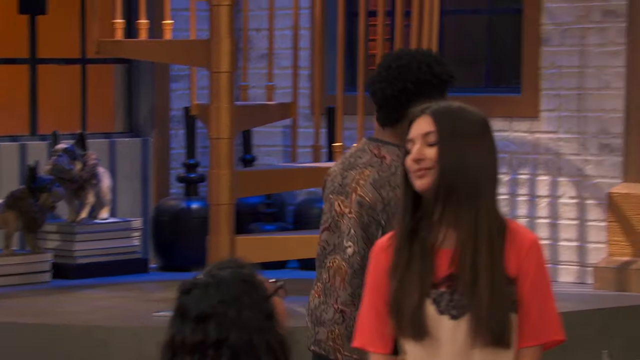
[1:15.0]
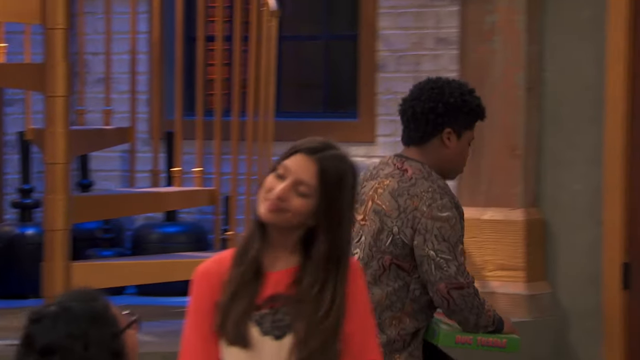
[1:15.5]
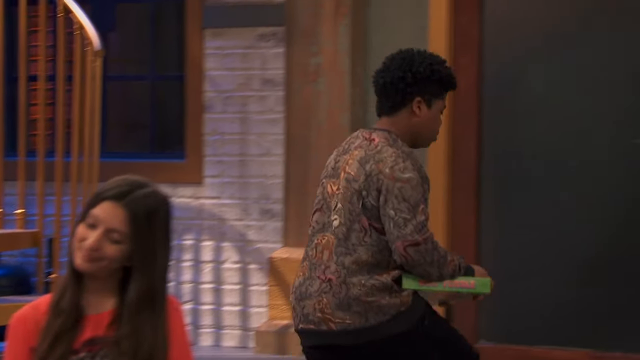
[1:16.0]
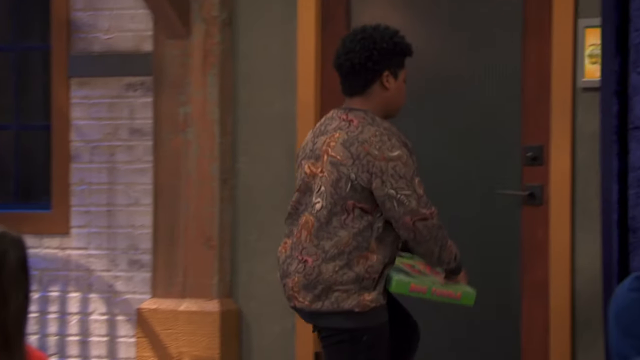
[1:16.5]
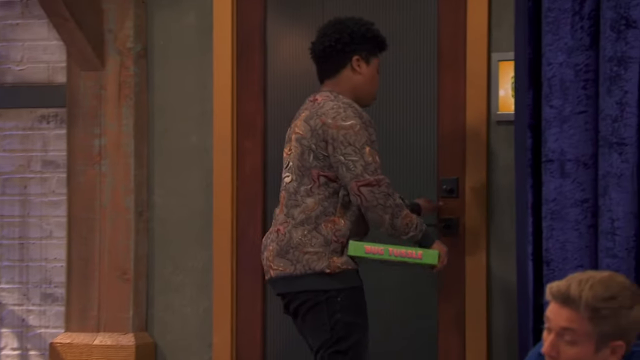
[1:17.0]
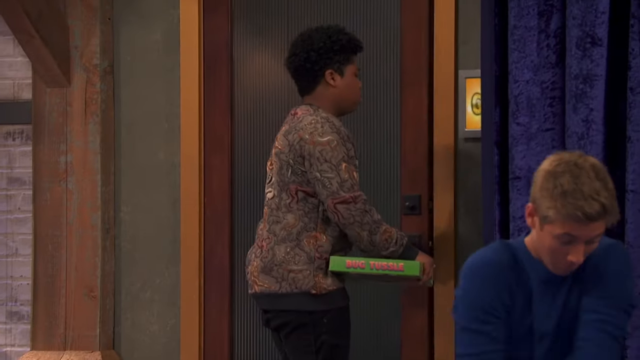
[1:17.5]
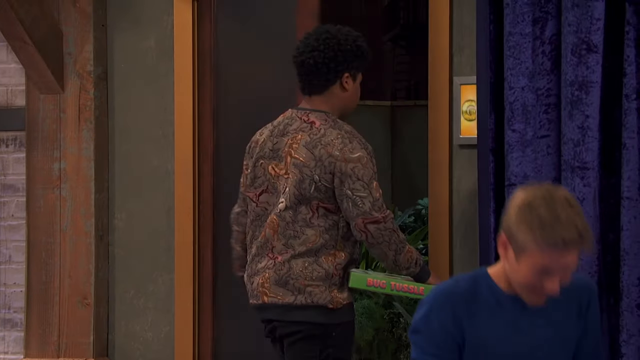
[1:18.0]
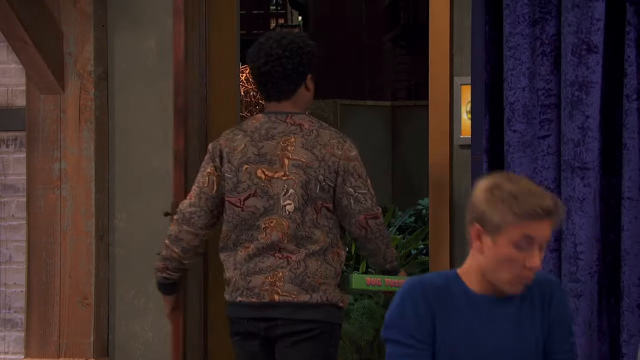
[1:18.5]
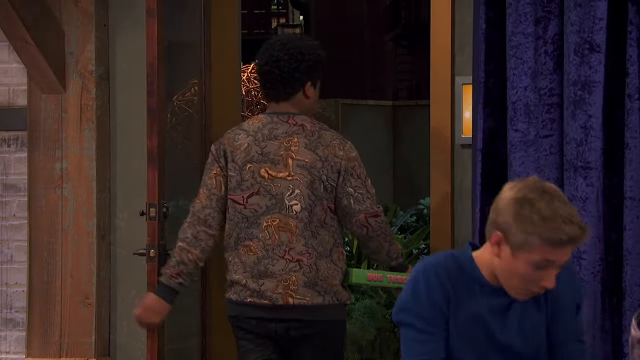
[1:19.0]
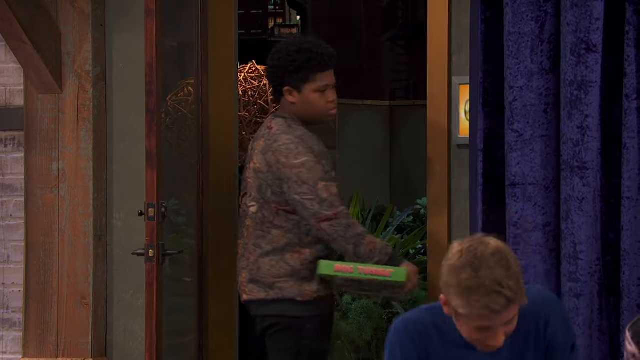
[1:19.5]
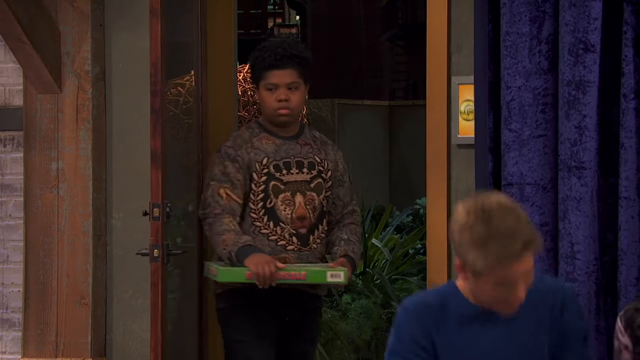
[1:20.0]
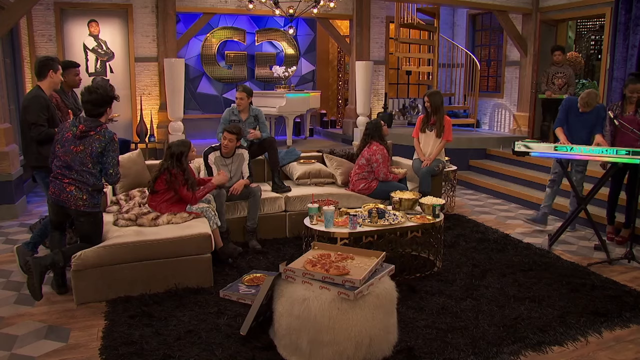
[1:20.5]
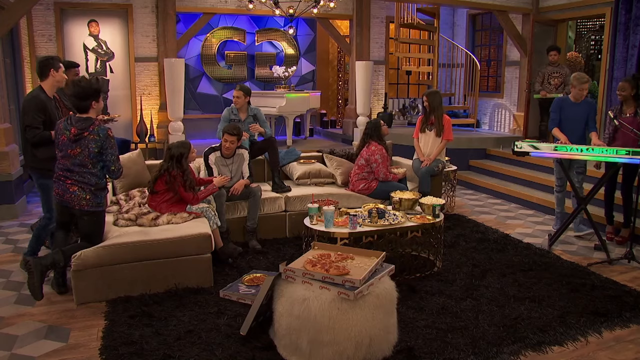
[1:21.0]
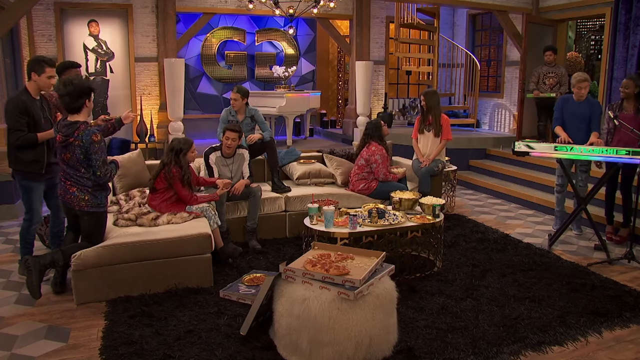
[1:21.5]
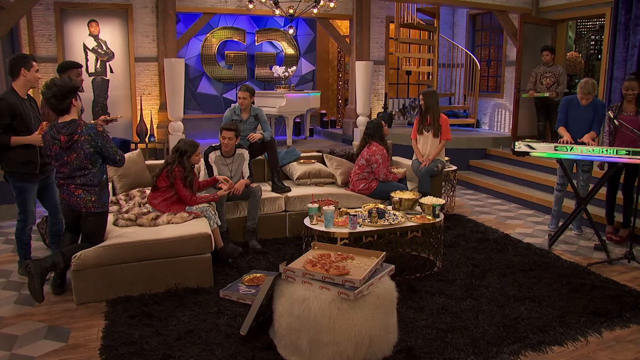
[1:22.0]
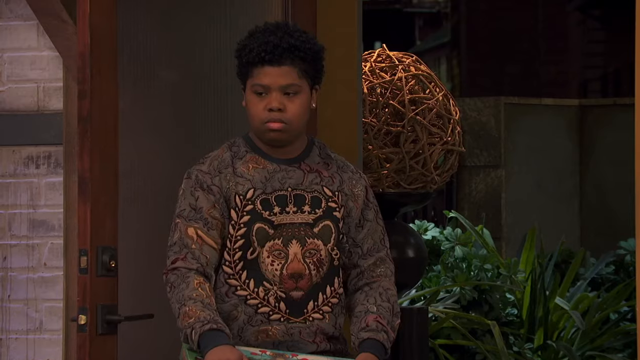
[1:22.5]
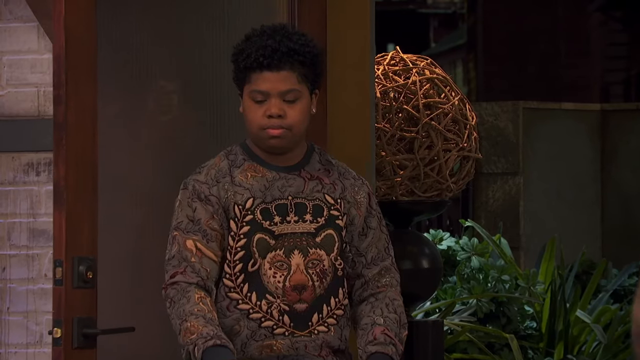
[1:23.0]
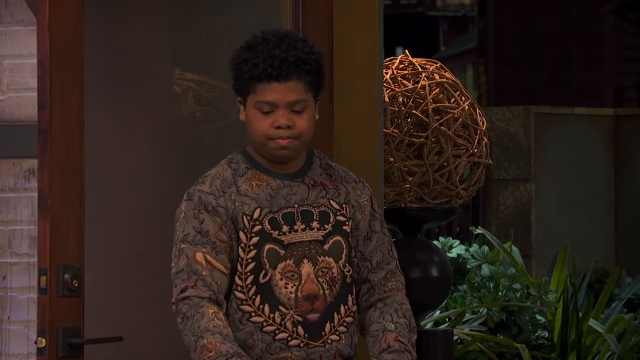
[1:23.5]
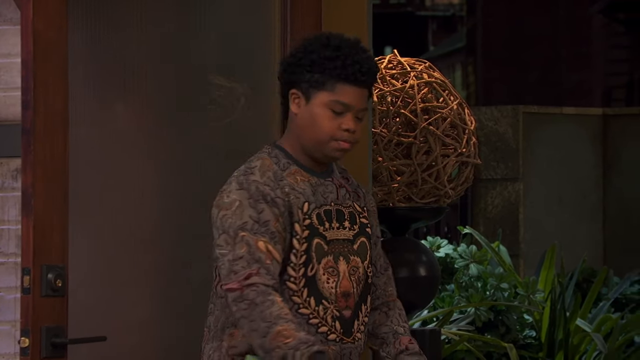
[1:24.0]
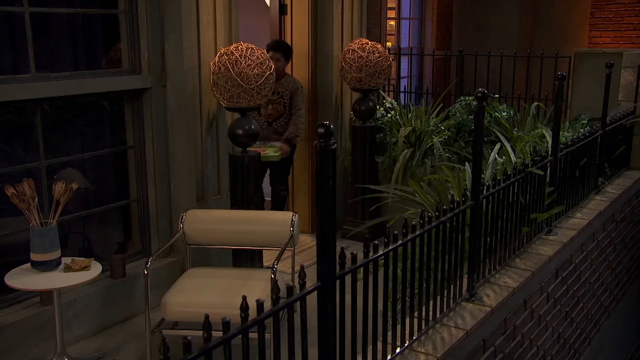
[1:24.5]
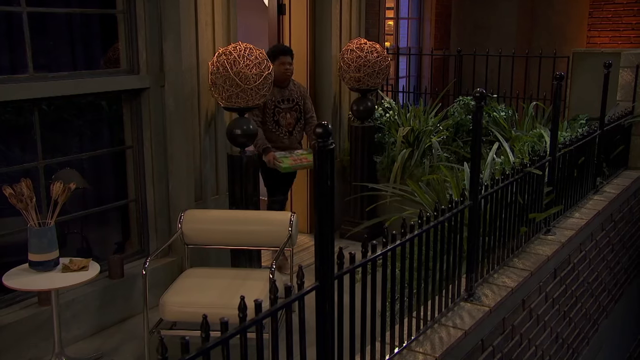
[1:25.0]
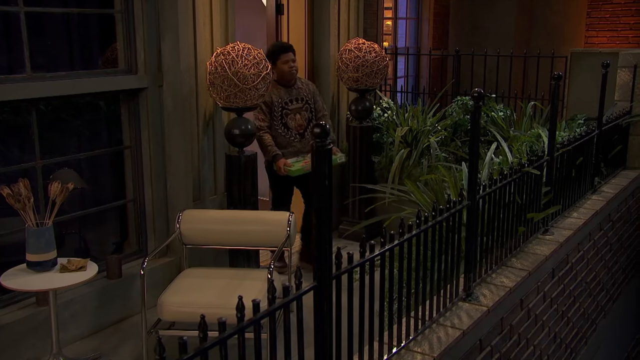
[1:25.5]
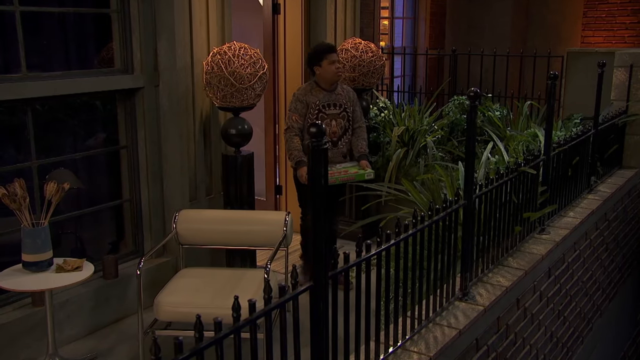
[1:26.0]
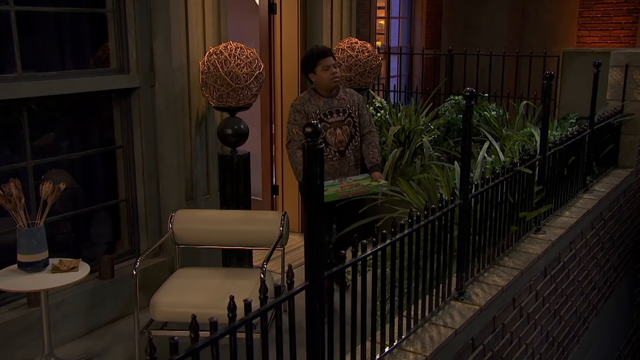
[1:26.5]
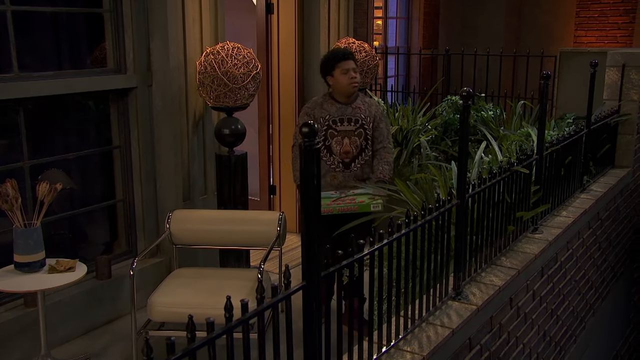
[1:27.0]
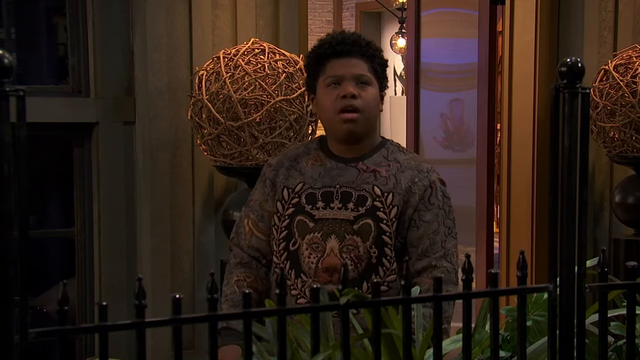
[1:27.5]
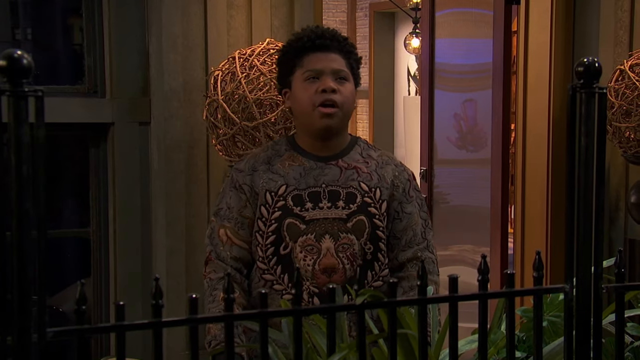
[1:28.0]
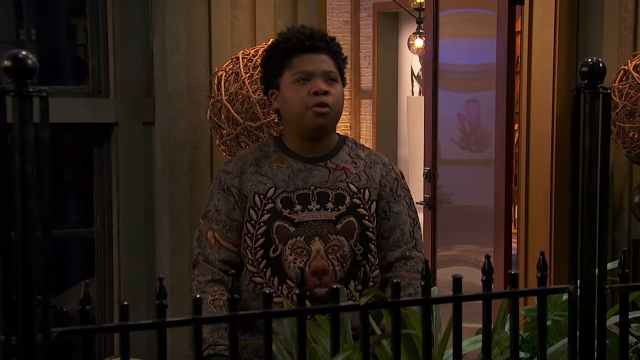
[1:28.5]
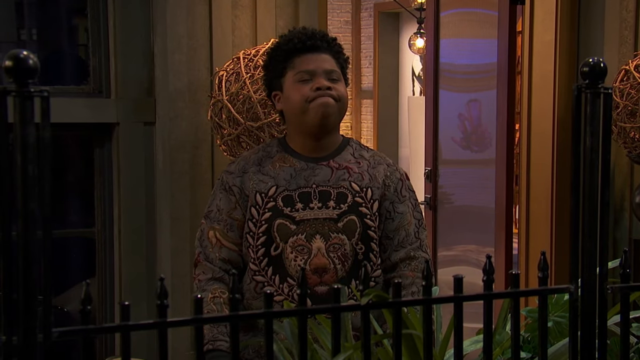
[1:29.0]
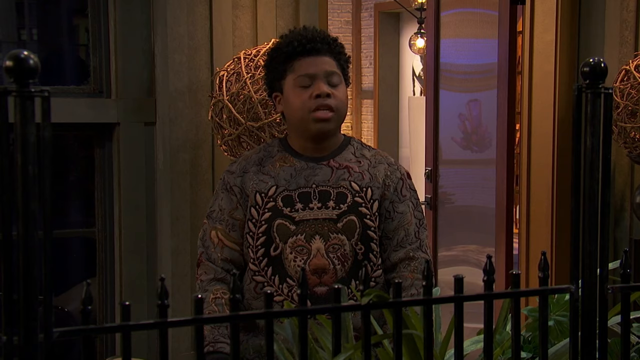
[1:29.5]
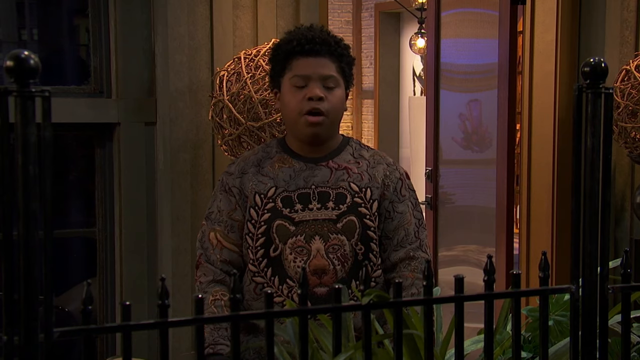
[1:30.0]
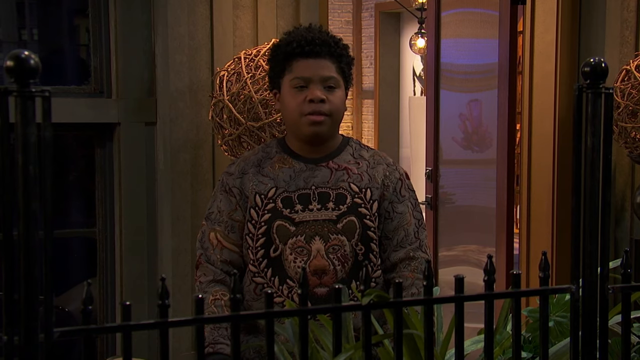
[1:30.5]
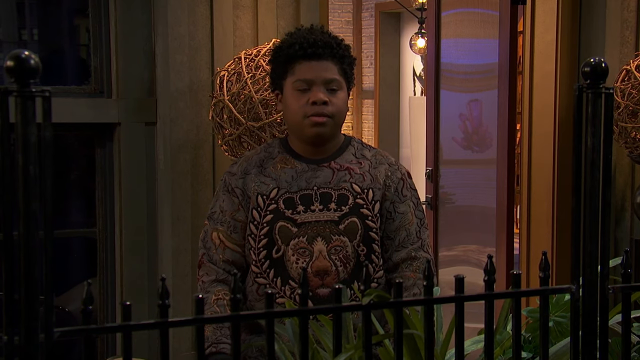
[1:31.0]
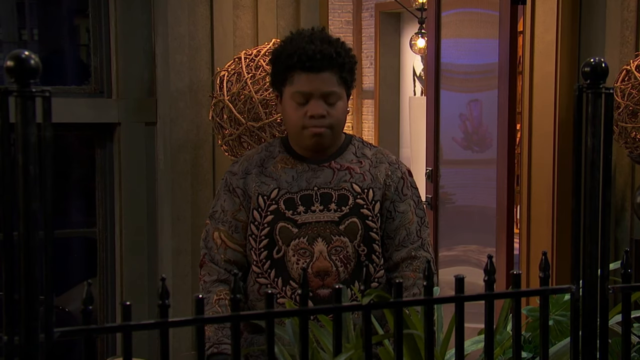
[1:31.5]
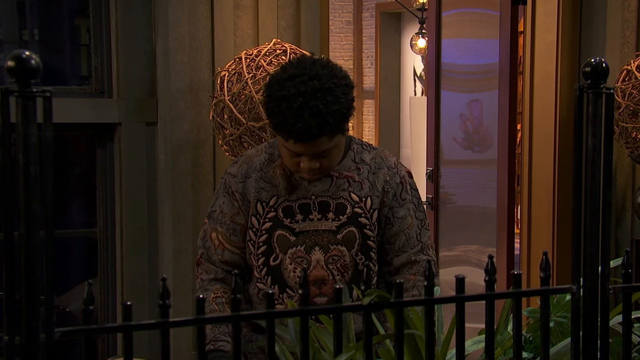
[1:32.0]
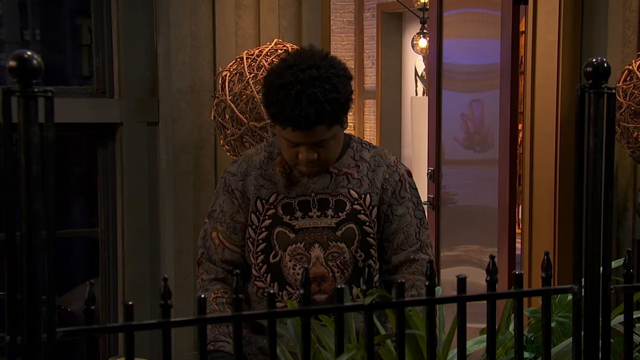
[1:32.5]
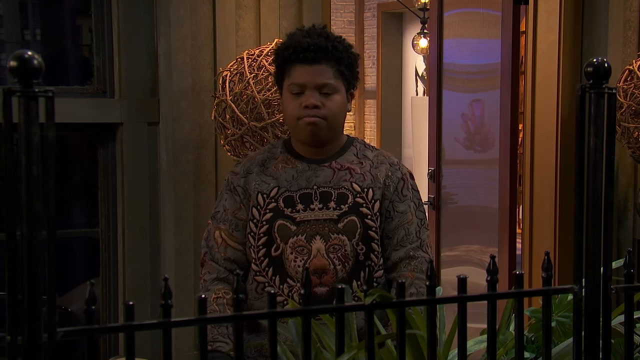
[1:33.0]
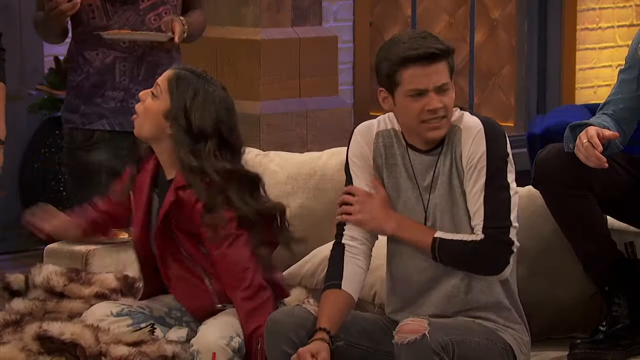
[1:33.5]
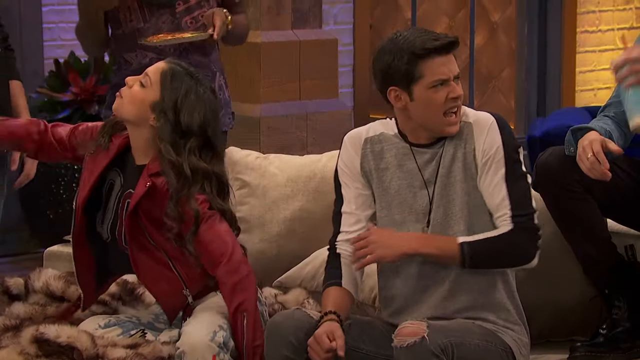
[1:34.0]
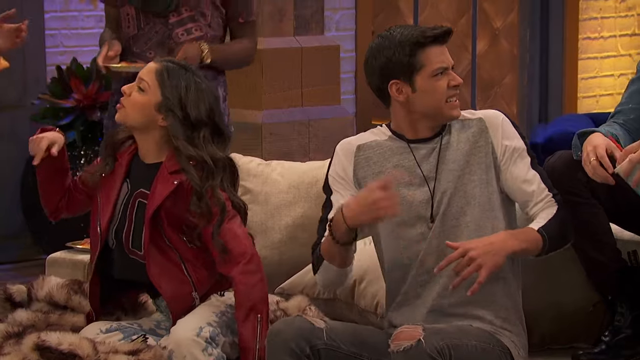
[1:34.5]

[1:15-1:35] The younger teen who has been trying to convince the room to engage with the board game walks out of the room onto what appears to be an outside balcony, looking very discouraged. He looks around, lowers his head, and says something to himself as no one is listening. Inside the main room, the remaining teens continue to party and have fun, and the young individual continues to play the instrument in the background.